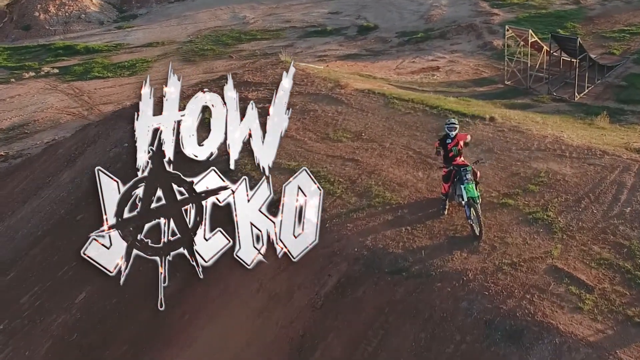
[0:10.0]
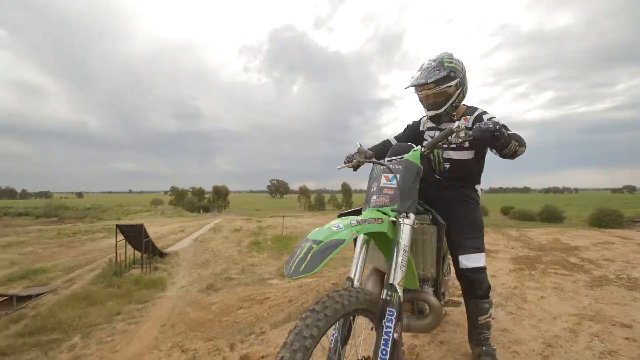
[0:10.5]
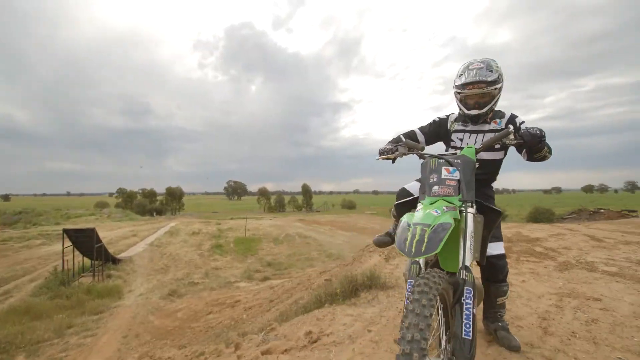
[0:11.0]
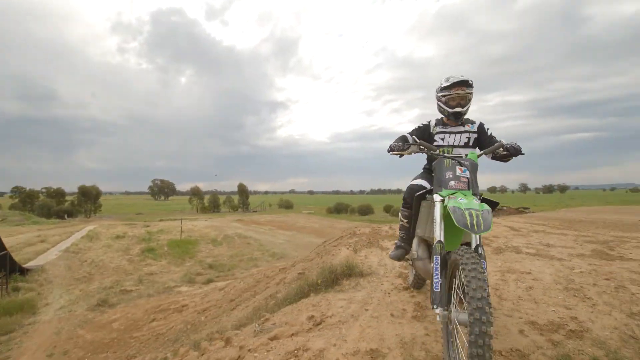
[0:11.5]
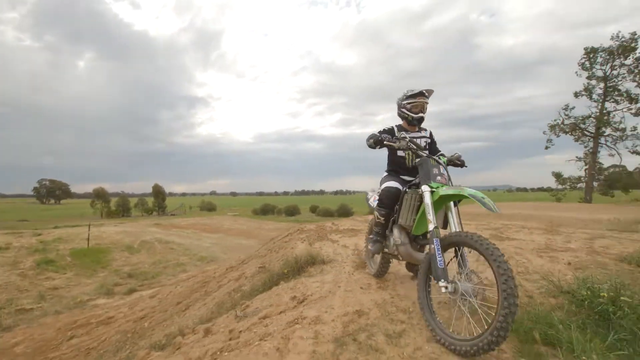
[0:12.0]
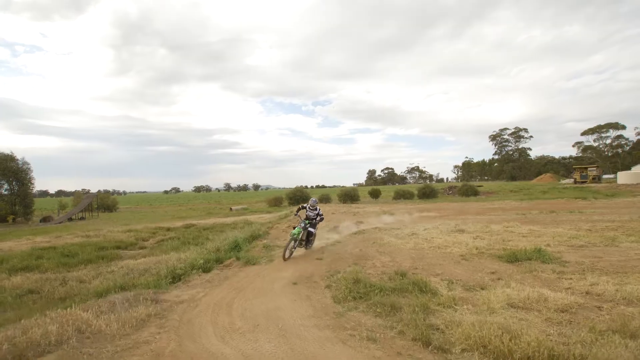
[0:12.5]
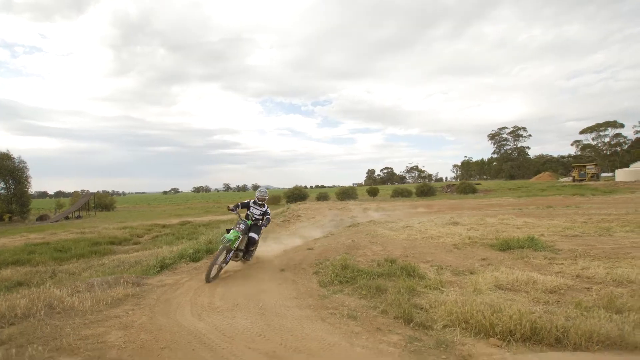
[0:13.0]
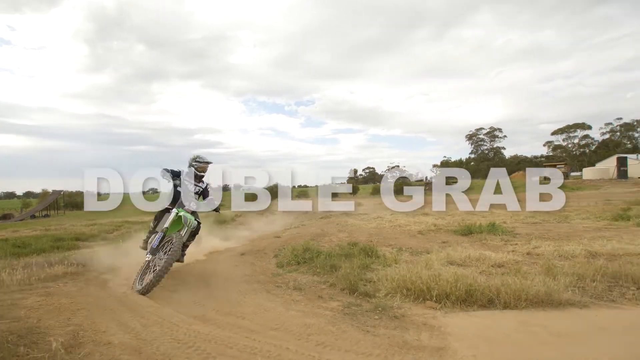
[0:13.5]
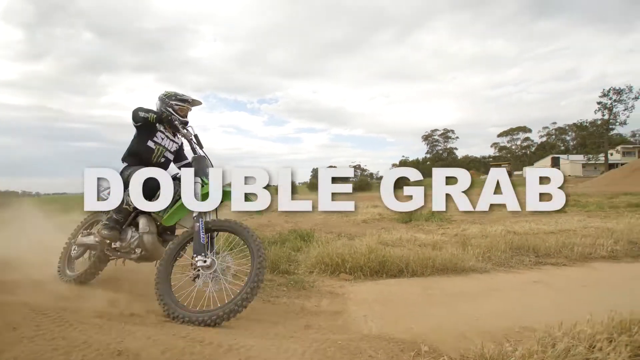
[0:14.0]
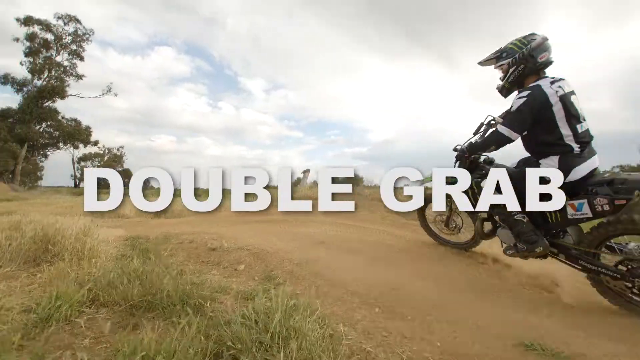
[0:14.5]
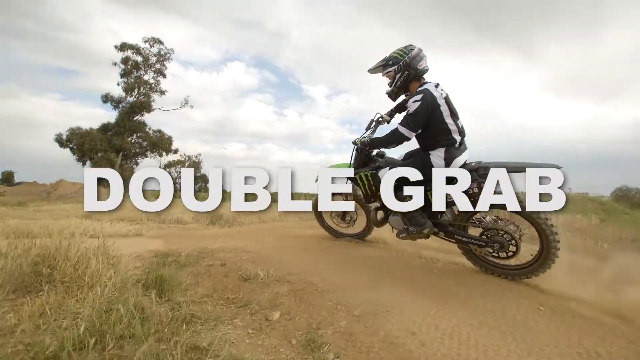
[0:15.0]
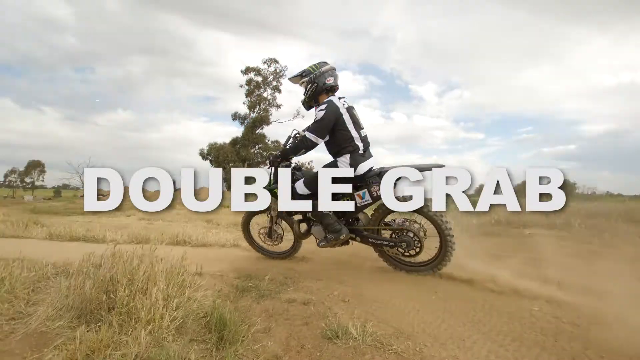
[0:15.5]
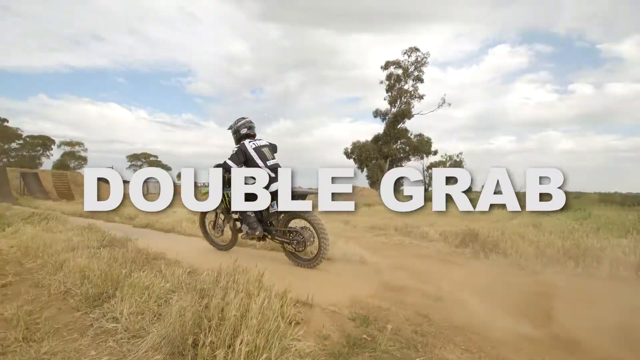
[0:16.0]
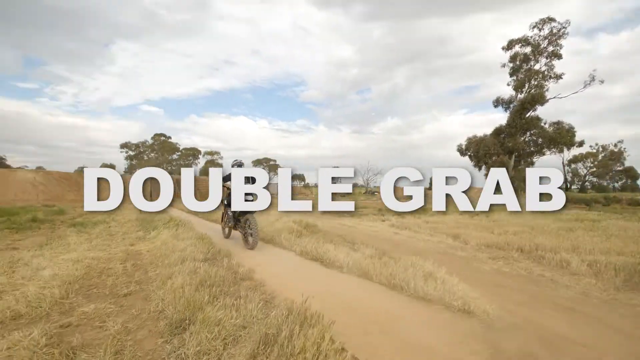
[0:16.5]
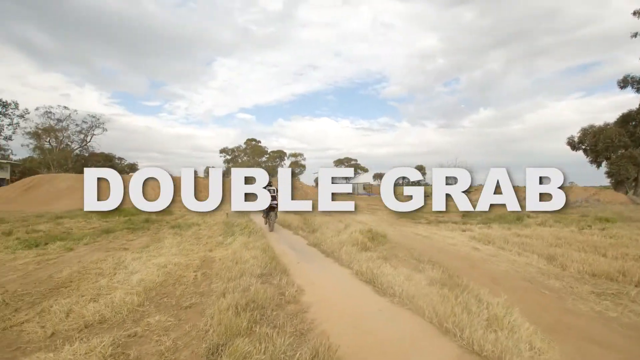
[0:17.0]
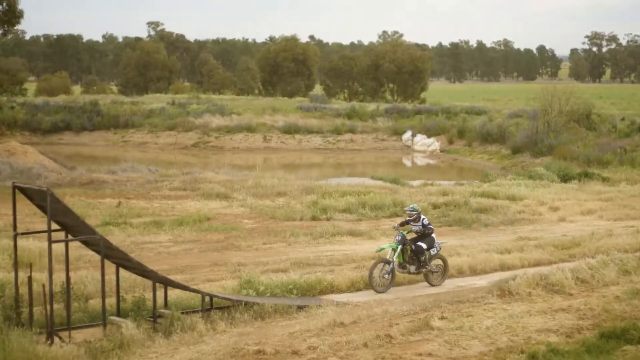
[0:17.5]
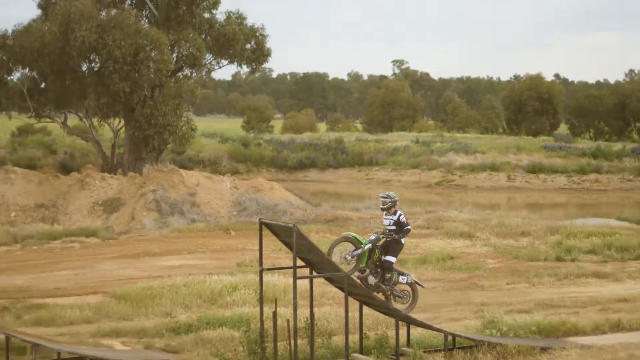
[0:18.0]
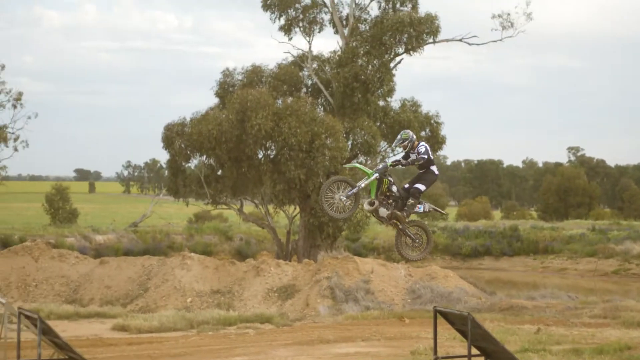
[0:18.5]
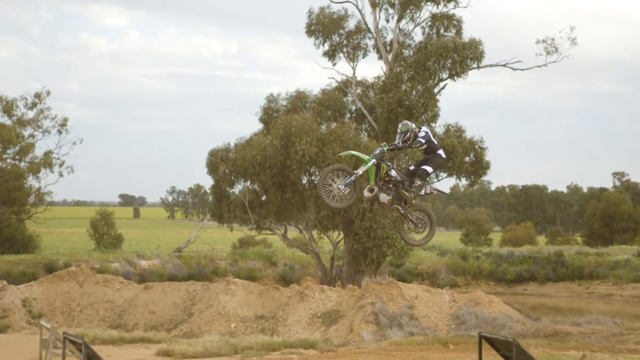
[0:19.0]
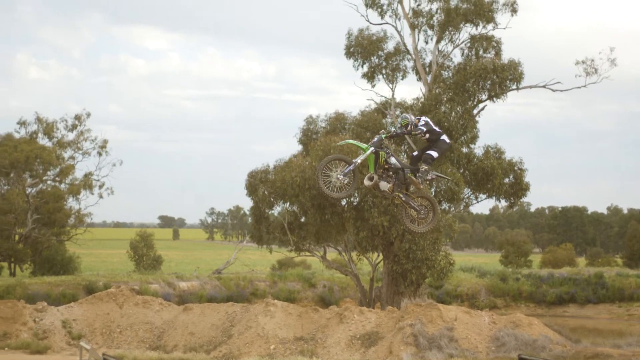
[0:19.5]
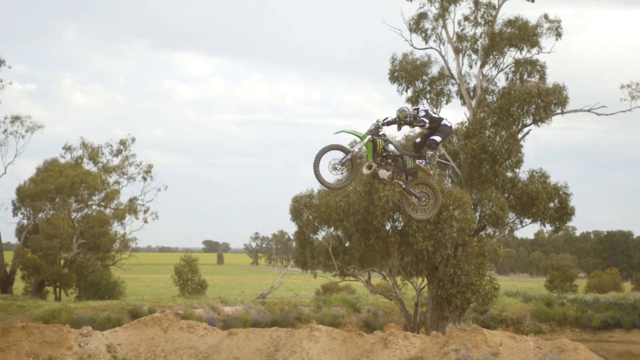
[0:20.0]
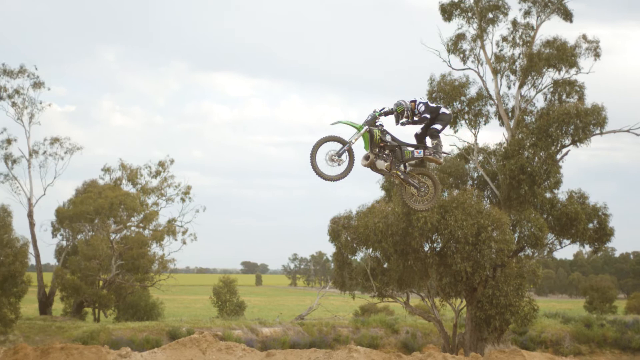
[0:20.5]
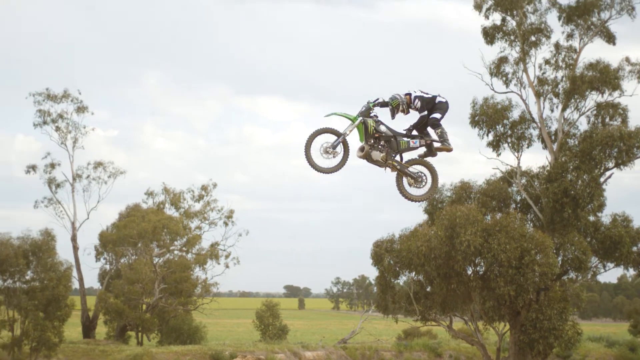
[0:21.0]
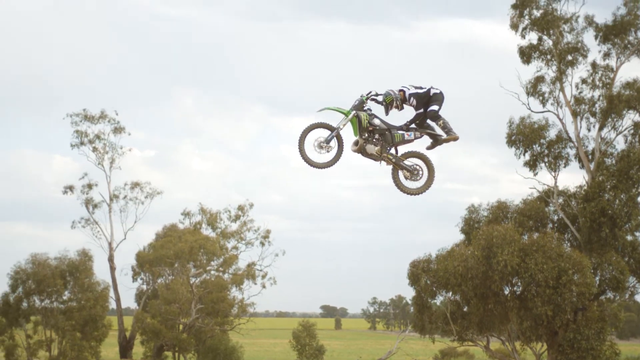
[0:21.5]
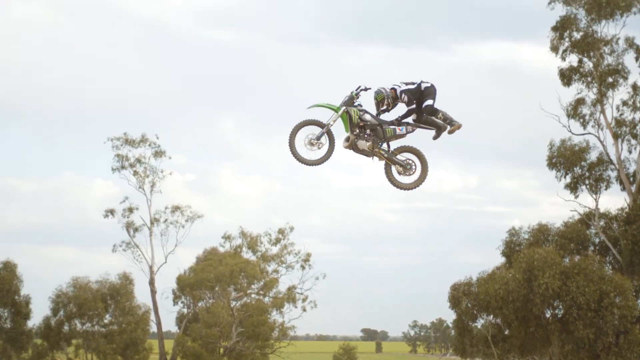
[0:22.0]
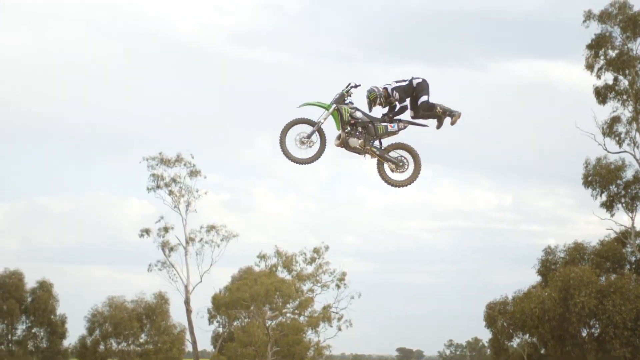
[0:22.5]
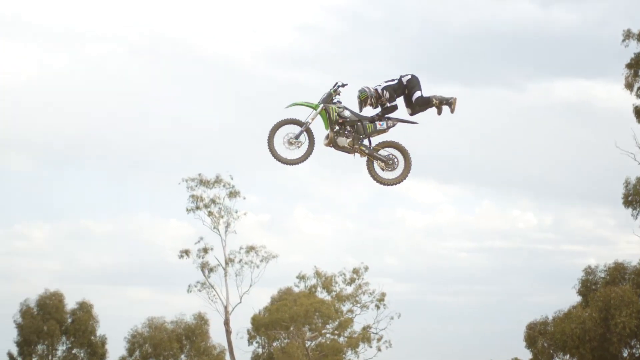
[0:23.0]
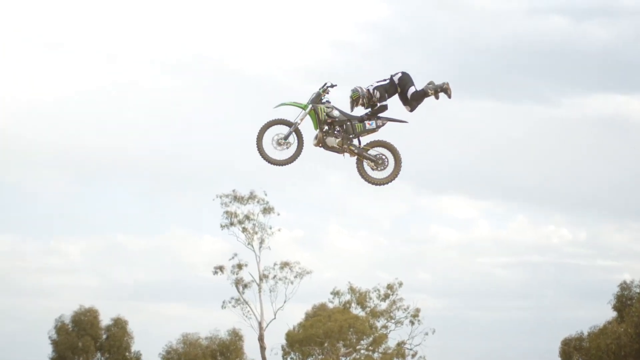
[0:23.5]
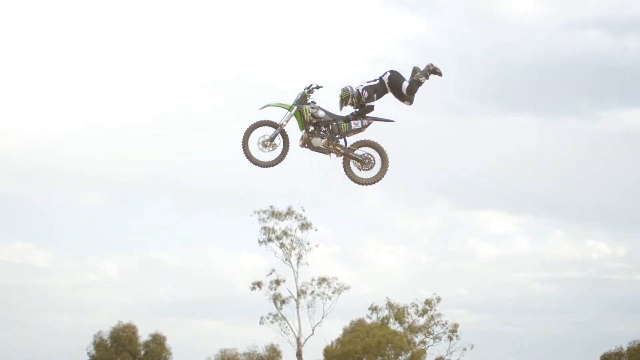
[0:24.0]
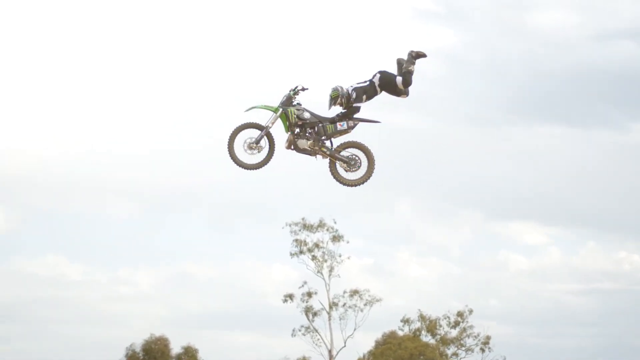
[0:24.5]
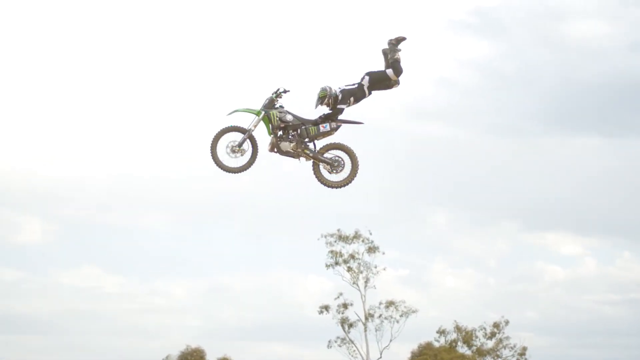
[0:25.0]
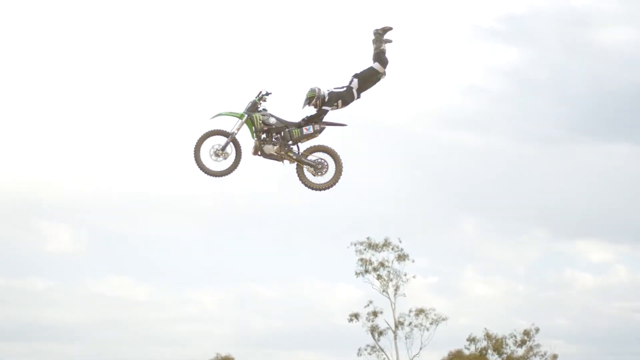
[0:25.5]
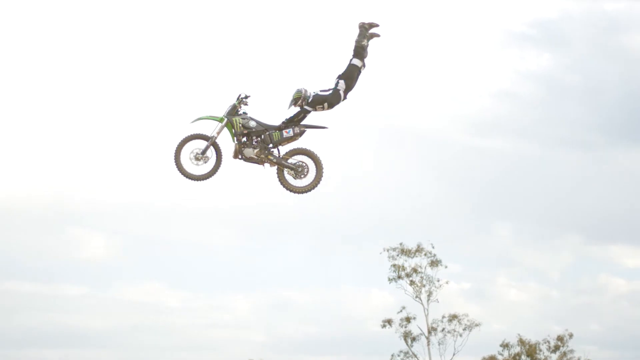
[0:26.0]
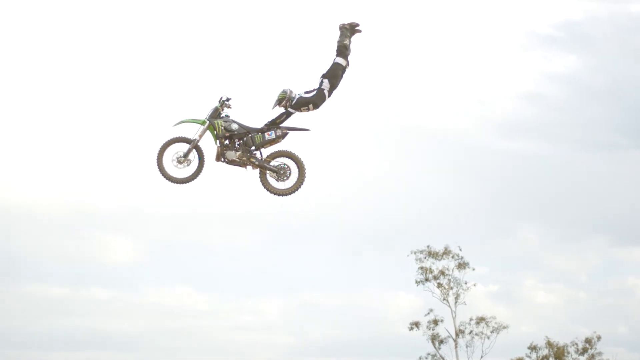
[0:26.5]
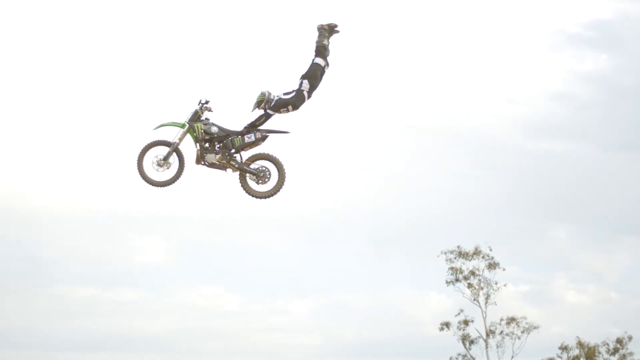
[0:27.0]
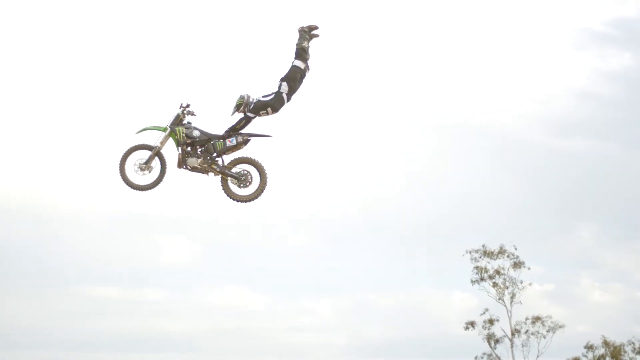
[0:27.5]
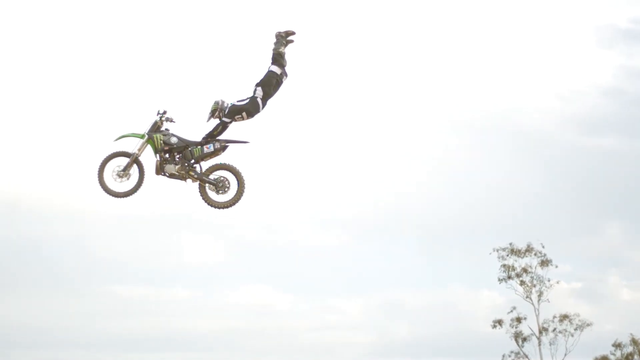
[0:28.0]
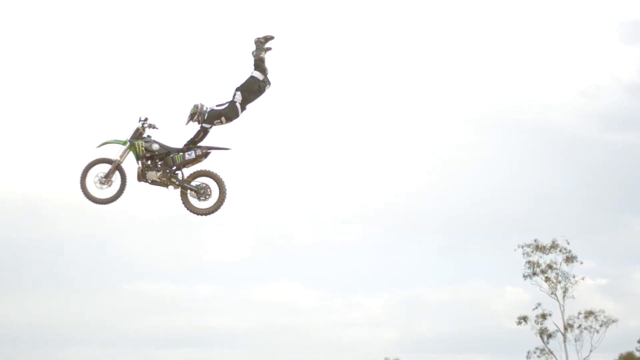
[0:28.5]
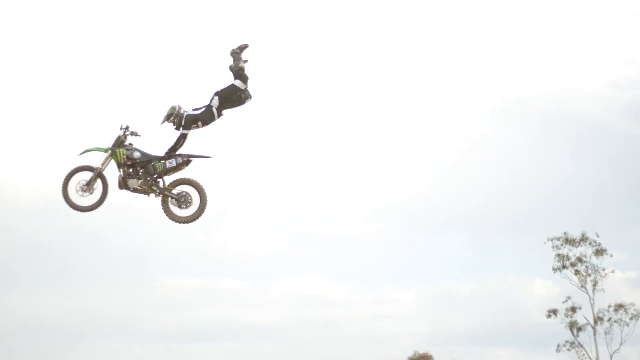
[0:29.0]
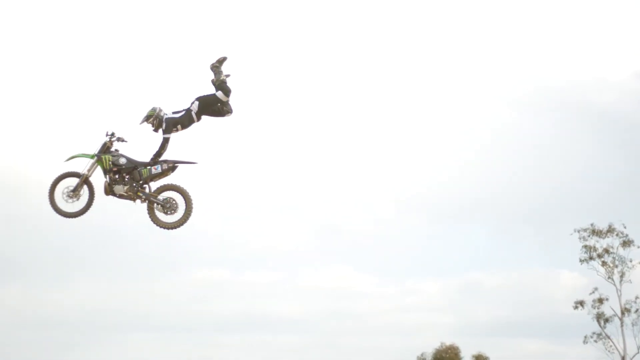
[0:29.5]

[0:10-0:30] The video cuts to different footage on a different day: it is still sunny but fairly cloudy, with what look like dark clouds in the distance. A little ramp is visible, and the cyclist wears a black suit with a helmet and words on his uniform. He rides a green motorbike. The camera pulls away, and he cruises toward the camera, turns, and kicks up dust. The words "double grab" appear on screen as the video pauses with him at an angle. He then turns, drives off along a little dirt road, and goes up a ramp. In slow motion, as he goes up in the air he keeps hold with his right hand while letting himself off the seat; his left hand grips the seat, then his right hand grips the other side, and he kicks his legs up in the air, extending straight up like a handstand.